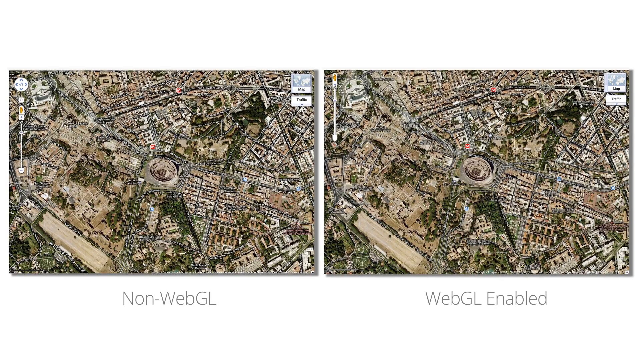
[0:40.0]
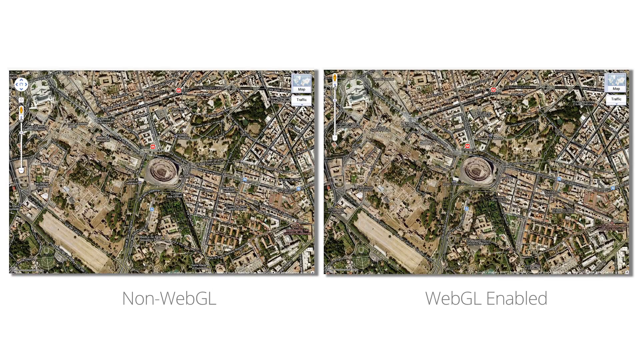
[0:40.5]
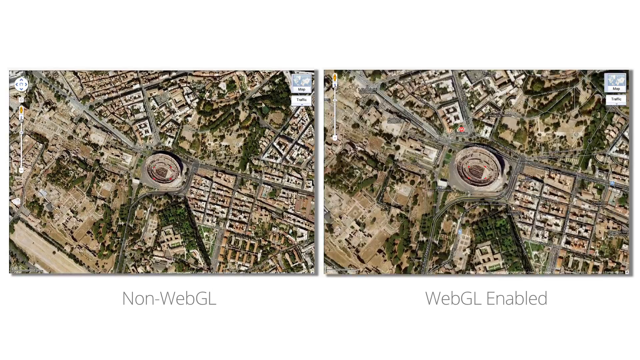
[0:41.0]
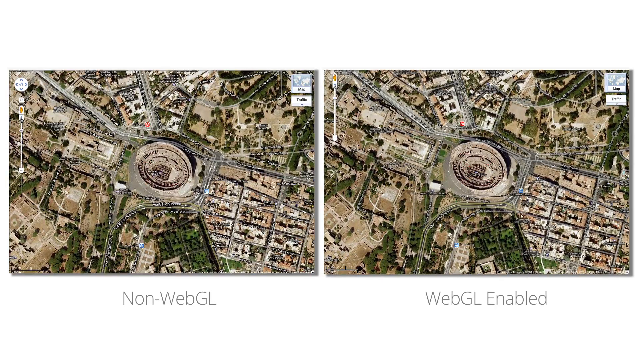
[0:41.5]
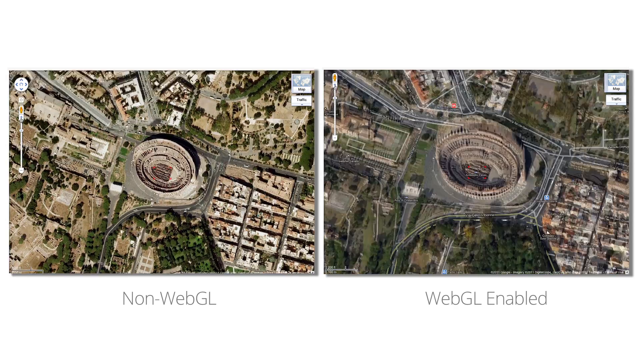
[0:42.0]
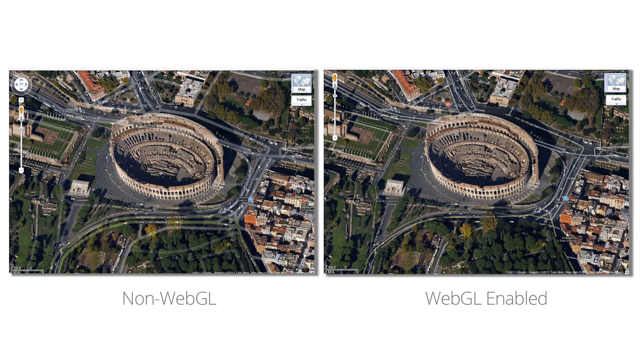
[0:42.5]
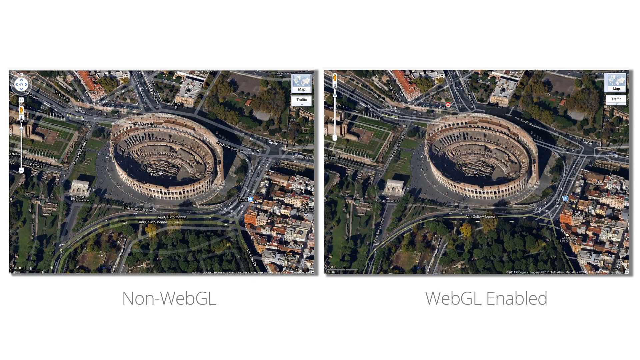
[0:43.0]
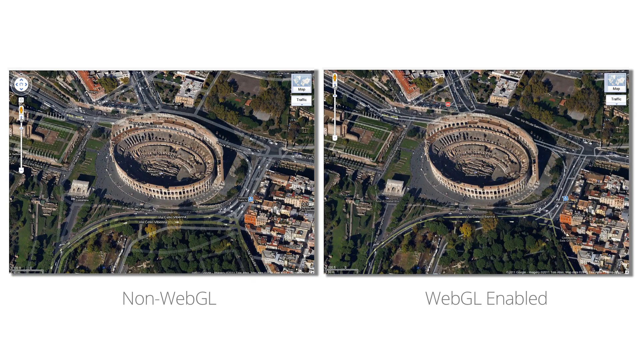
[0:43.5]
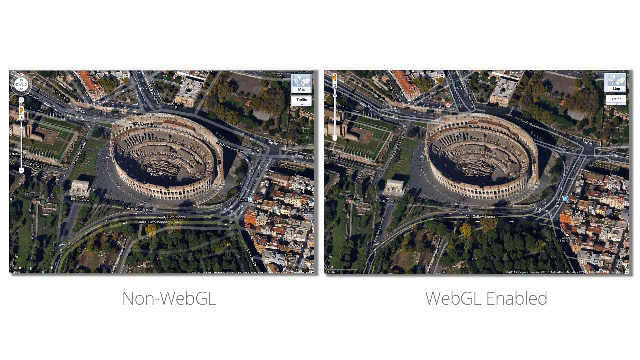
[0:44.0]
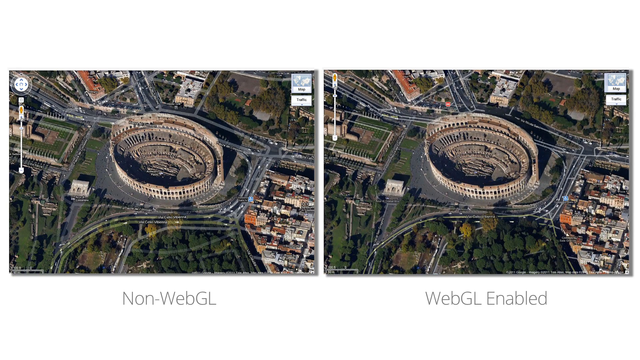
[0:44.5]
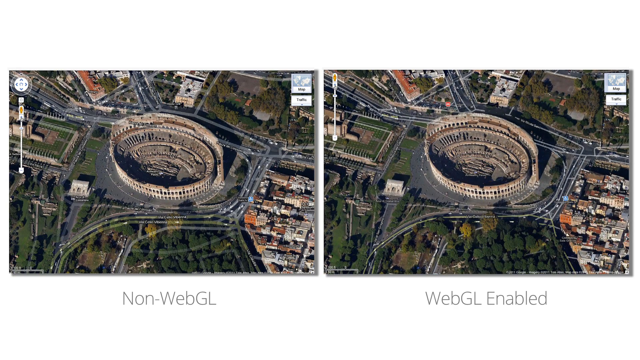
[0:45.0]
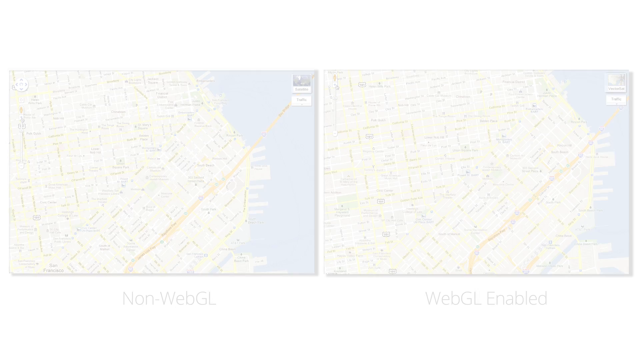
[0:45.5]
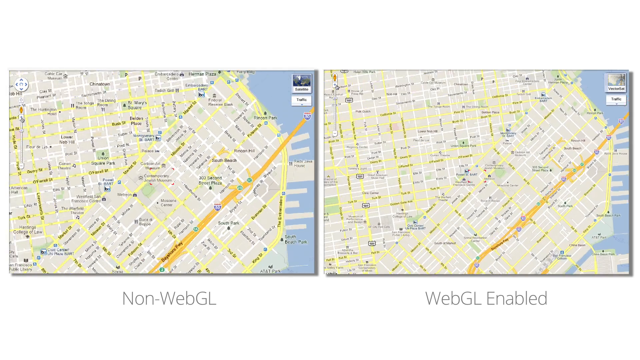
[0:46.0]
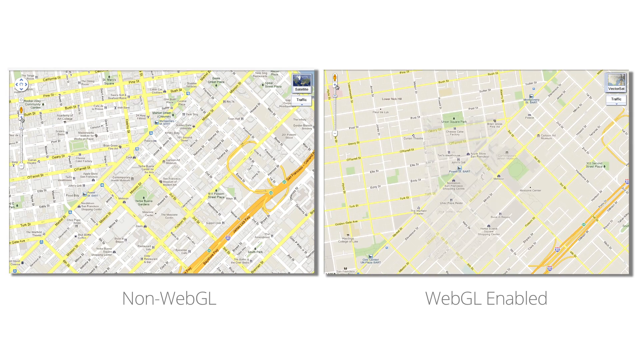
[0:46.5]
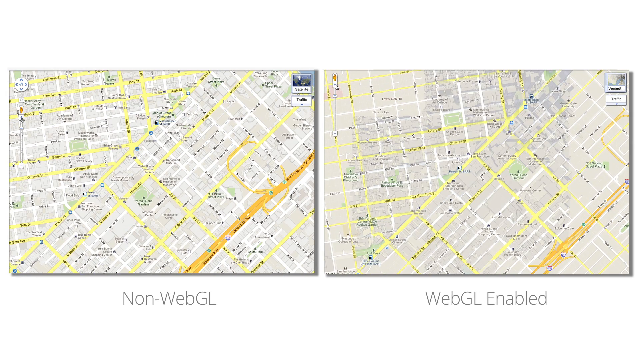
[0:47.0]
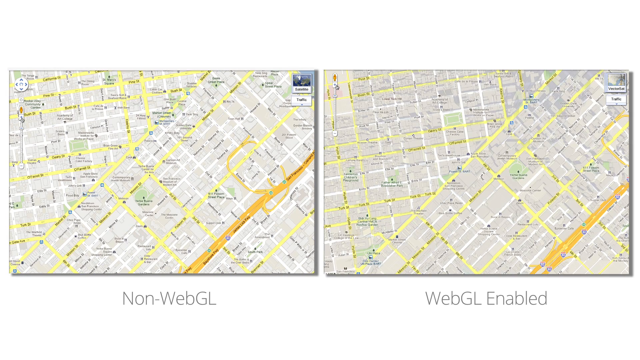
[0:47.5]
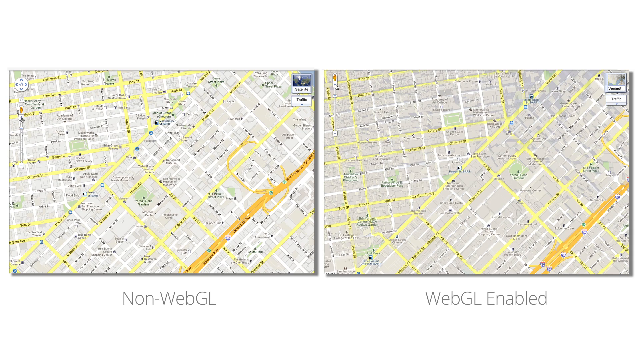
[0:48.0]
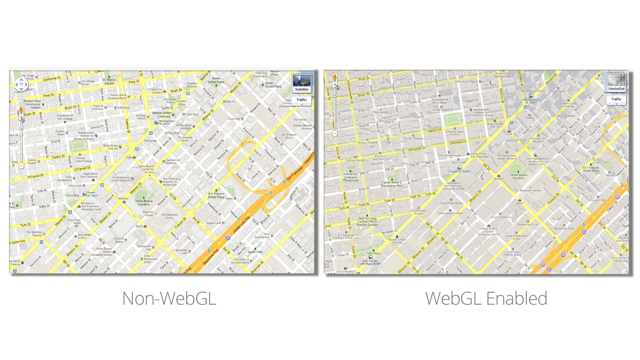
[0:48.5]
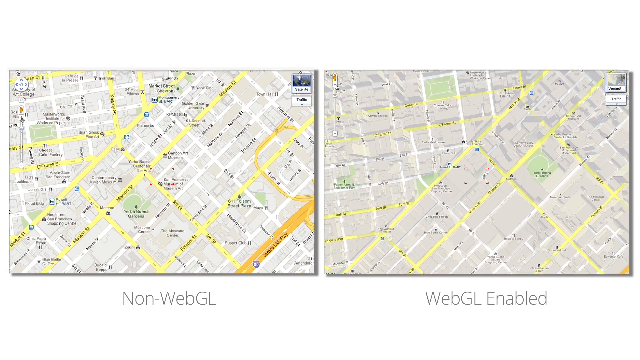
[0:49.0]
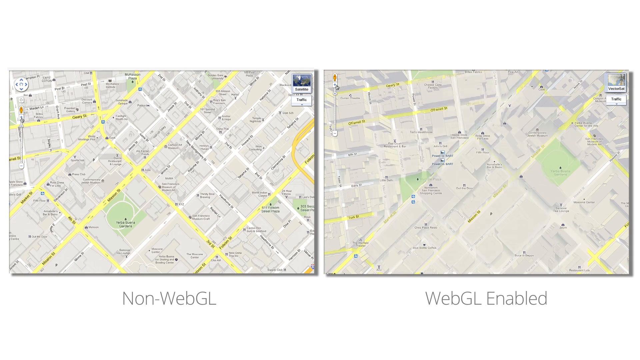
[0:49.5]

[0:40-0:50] The side-by-side comparison of Google Maps with and without WebGL shows a real-time zoom in on each. In the WebGL version the map updates every time it zooms in, while in the version without WebGL the map does not really update and the streets do not change or gain detail. The view zooms in on what looks like a stadium; in the WebGL version the streets kind of update and change as it zooms, and the view of the stadium shifts its point of view, whereas the non-WebGL version remains a static image.